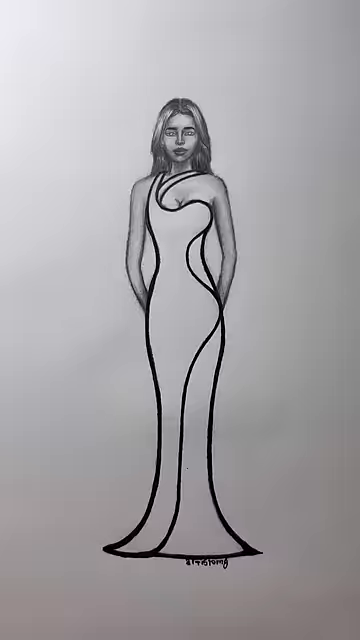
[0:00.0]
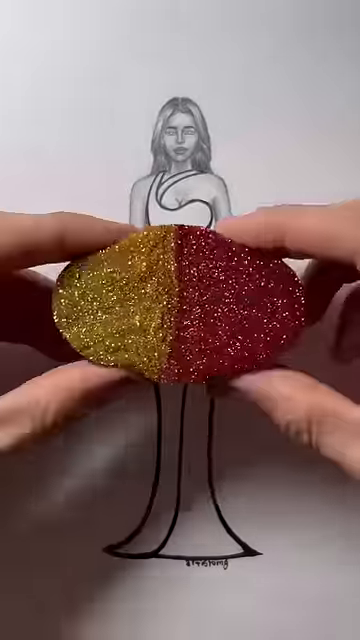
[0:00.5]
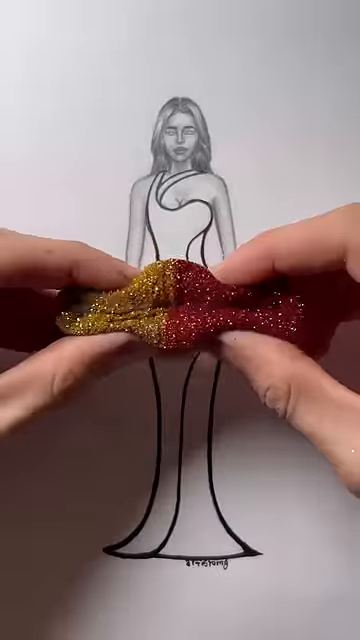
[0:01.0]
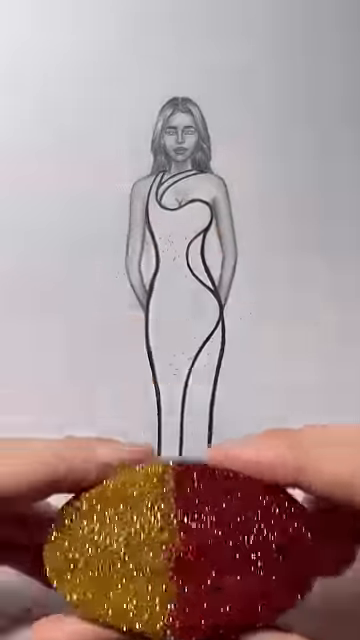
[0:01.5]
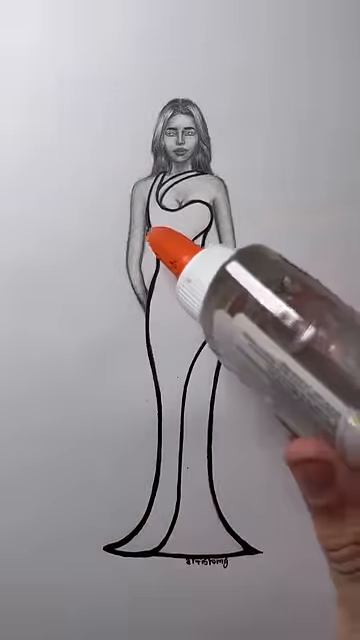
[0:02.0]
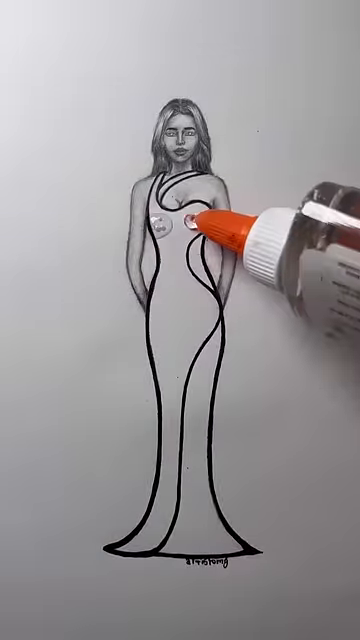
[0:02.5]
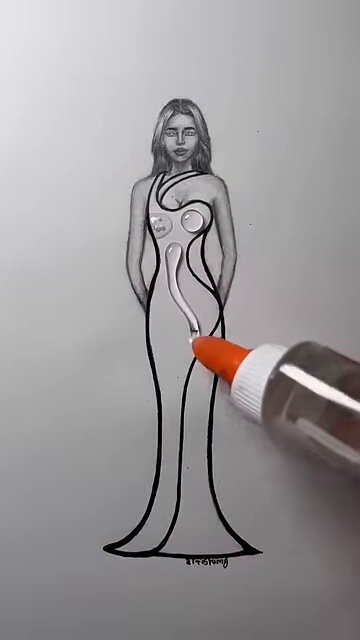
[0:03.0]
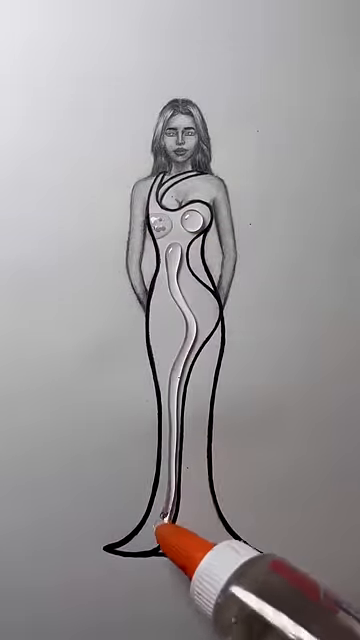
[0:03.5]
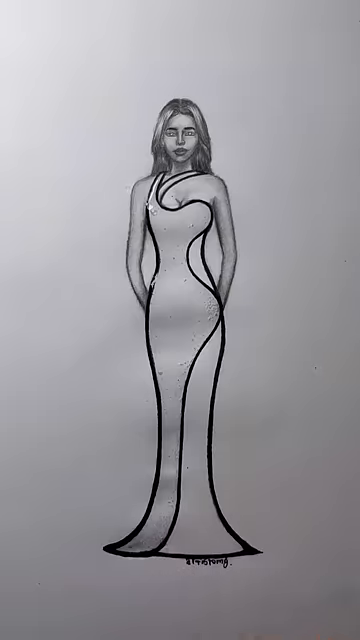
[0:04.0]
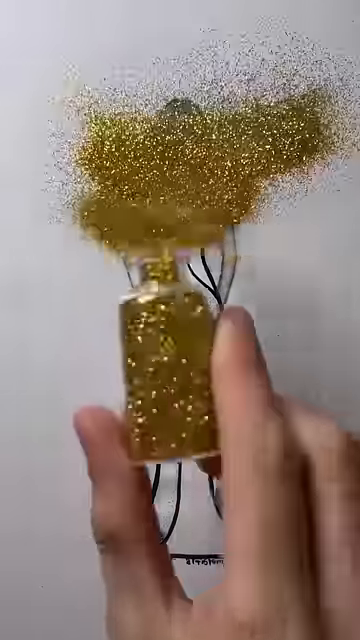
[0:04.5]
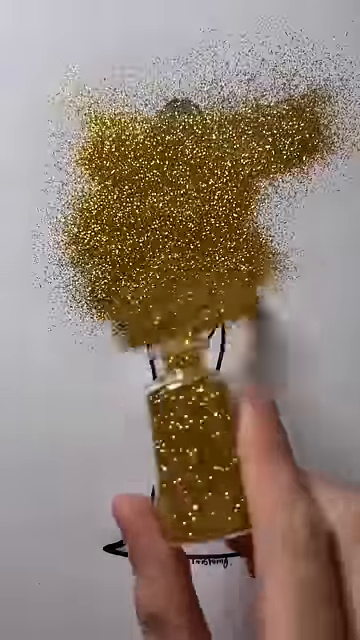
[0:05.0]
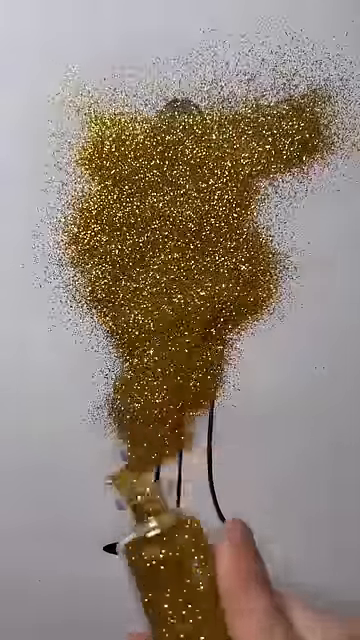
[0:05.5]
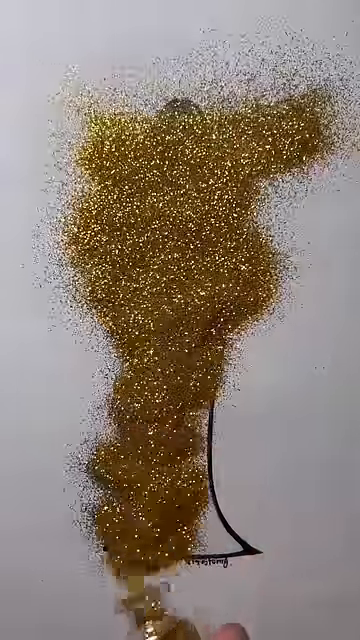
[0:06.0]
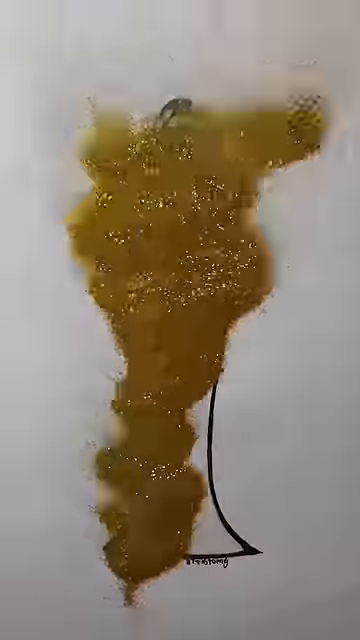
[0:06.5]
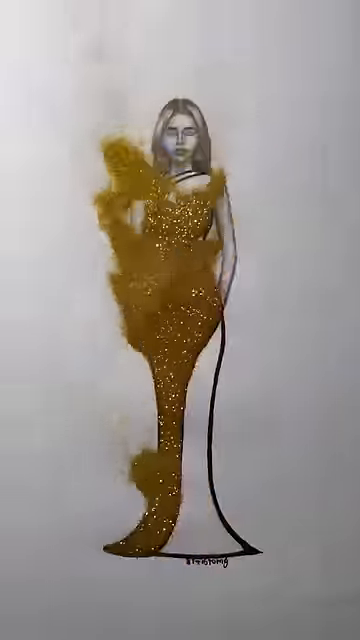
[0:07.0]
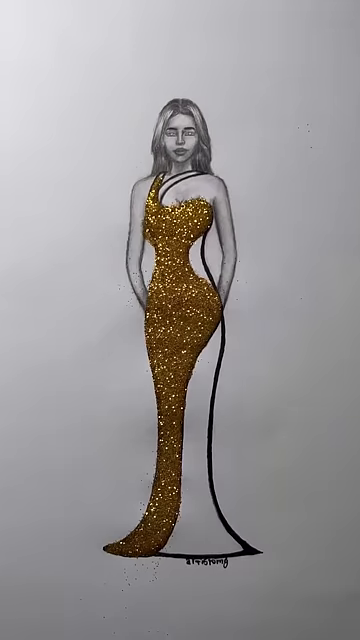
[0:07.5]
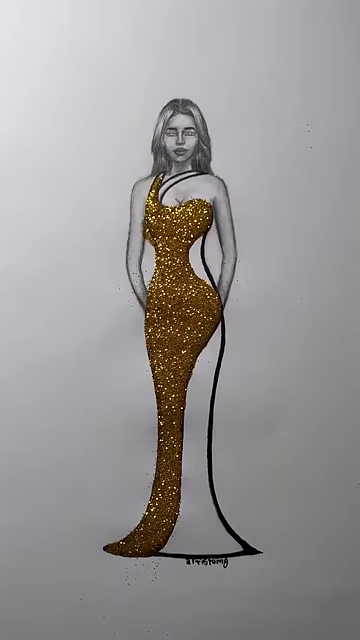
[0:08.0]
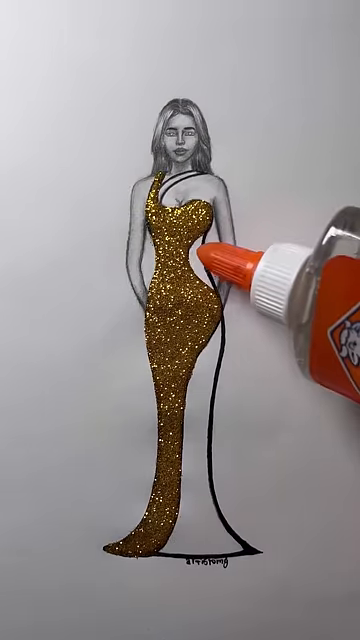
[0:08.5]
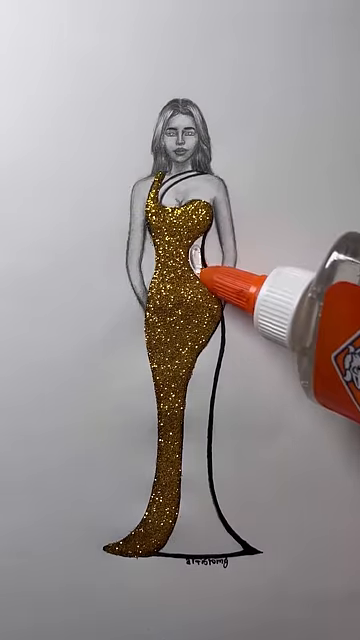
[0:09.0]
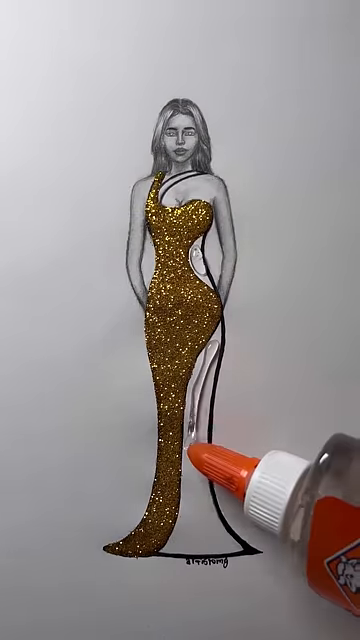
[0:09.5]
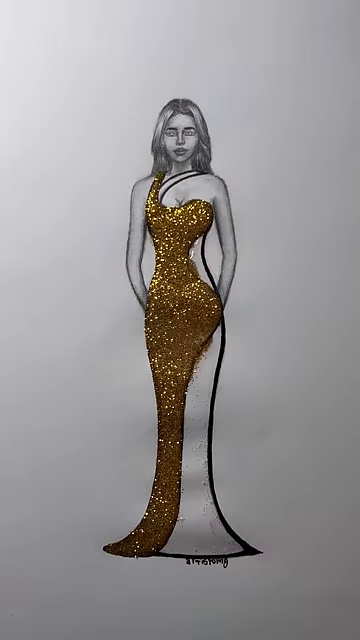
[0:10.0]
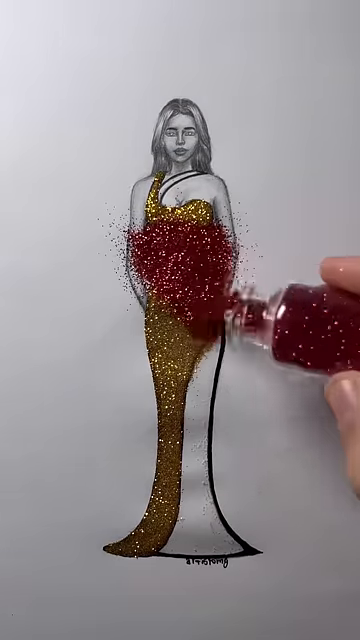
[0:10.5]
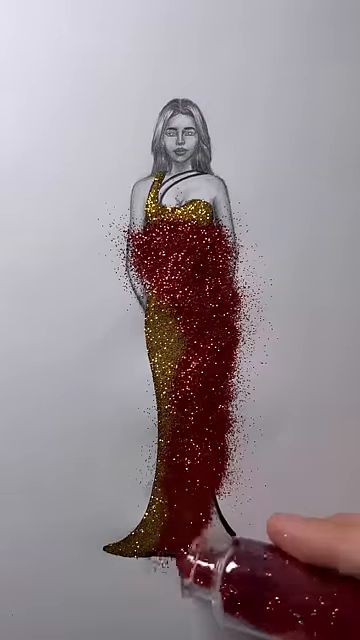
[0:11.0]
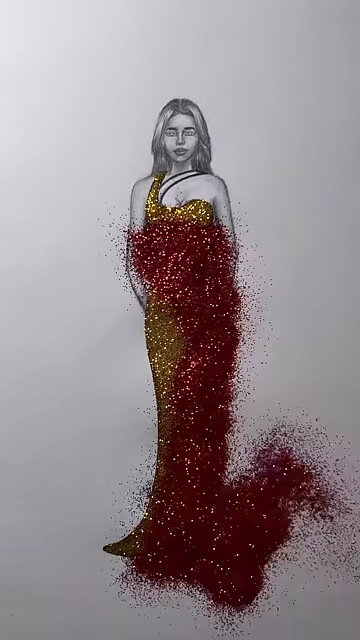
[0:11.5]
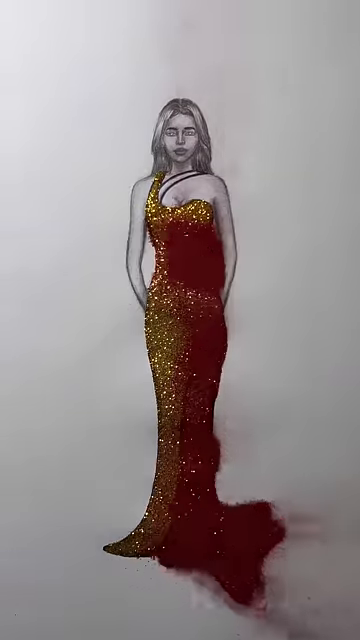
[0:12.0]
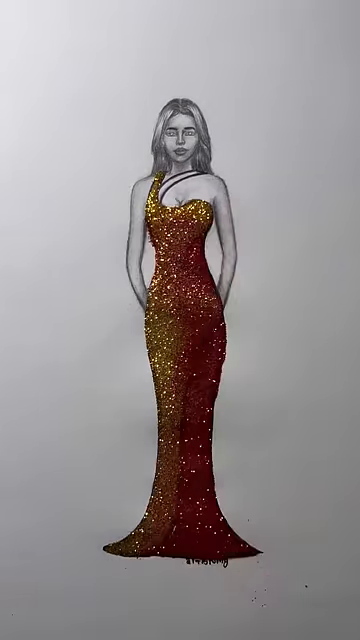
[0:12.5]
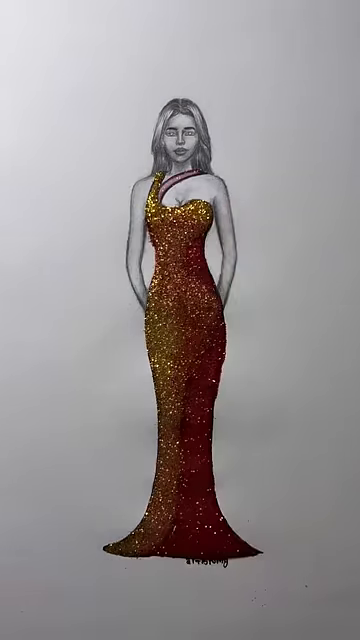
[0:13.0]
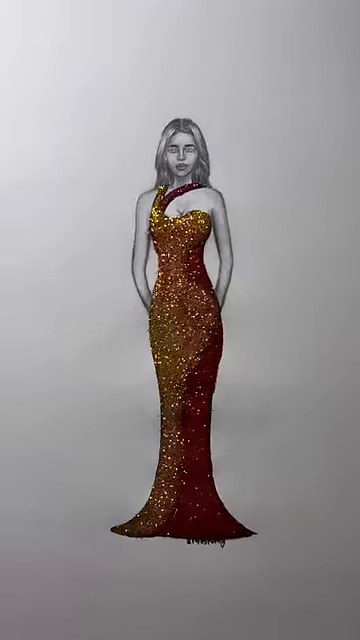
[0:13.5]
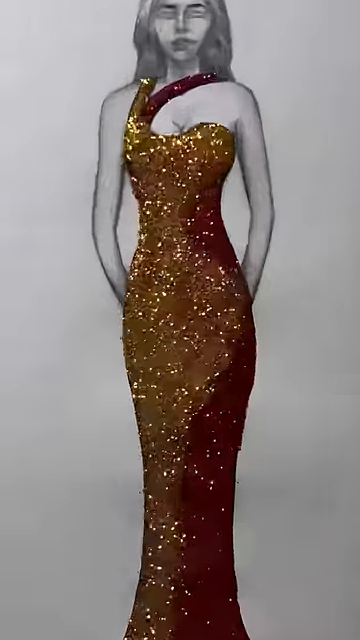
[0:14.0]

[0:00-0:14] A person's hands hold a sponge over a sketch of a woman in a gown. The sponge has two sides, one gold and the other ruby-like, and it appears to be glittery. The hands hold it right at the woman's midsection and squeeze it. A clear plastic Elmer's glue nozzle then drops spots onto one side of the gown, and someone's hands sprinkle gold glitter over the entire sketch. The glitter is blown away, and the gold glitter remains on that one side of the dress. The sketch is in black and white, and the woman has long dark hair. The Elmer's glue nozzle returns and drops more glue, followed by the ruby-colored glitter, which is then blown away. A close-up shows the image with one side of the gown gold and the other side ruby.